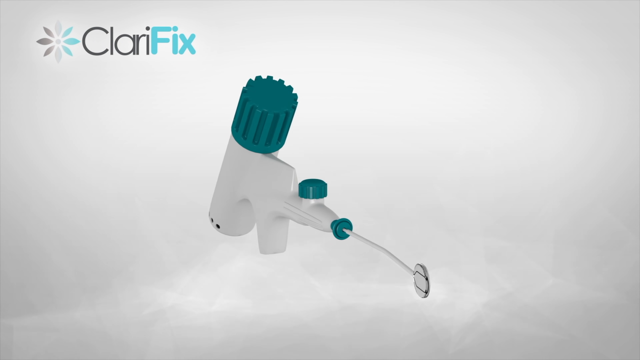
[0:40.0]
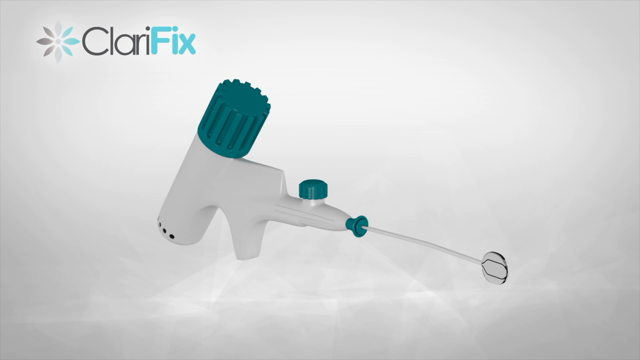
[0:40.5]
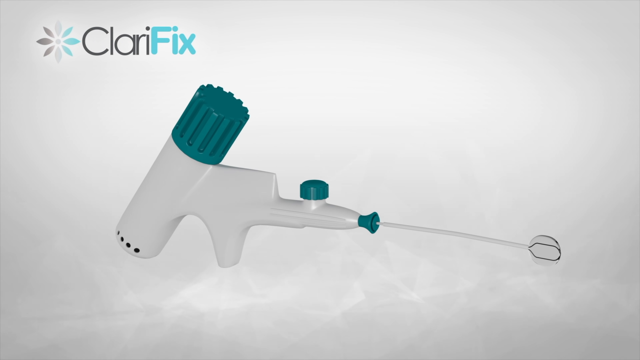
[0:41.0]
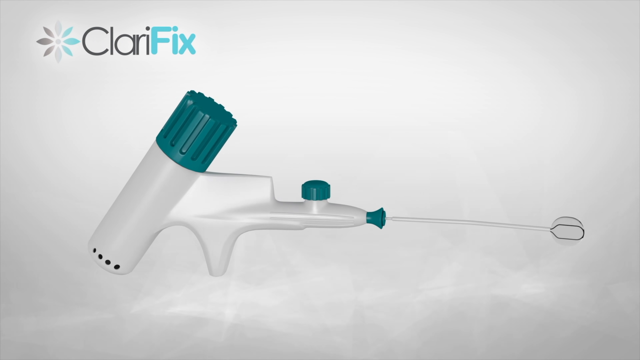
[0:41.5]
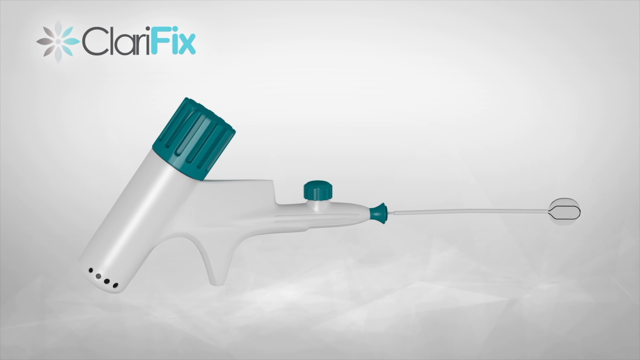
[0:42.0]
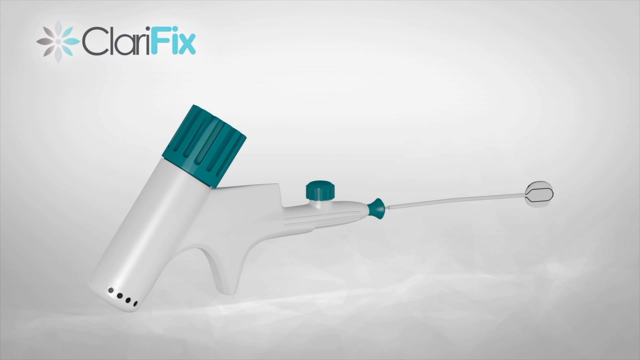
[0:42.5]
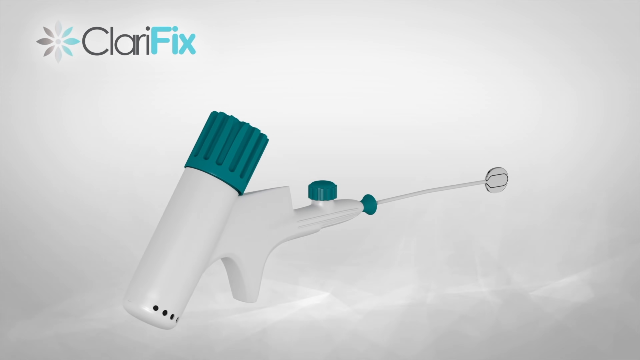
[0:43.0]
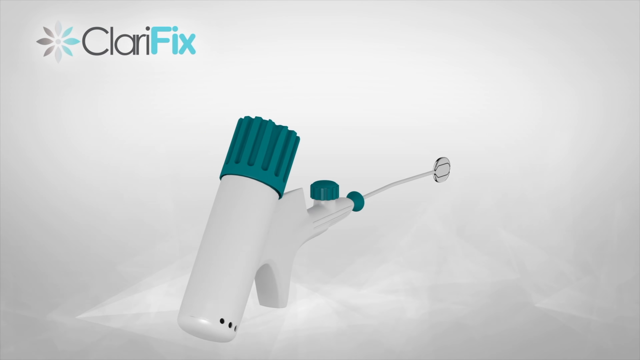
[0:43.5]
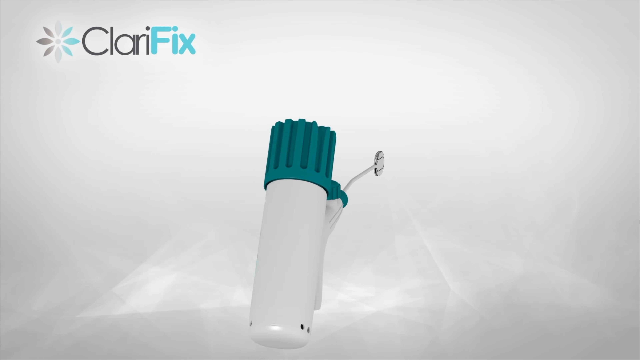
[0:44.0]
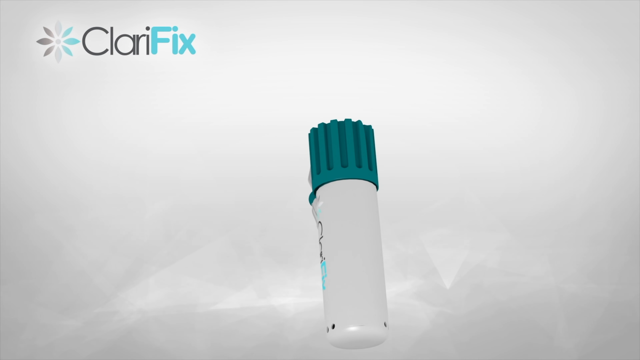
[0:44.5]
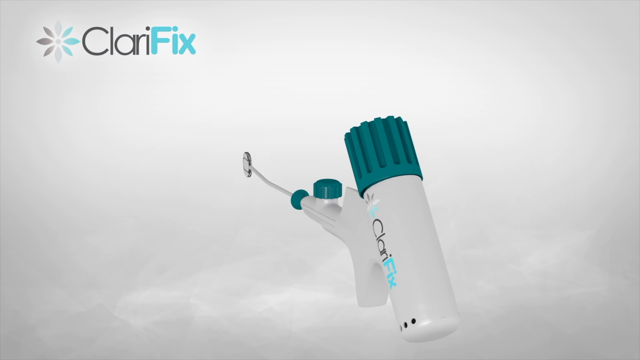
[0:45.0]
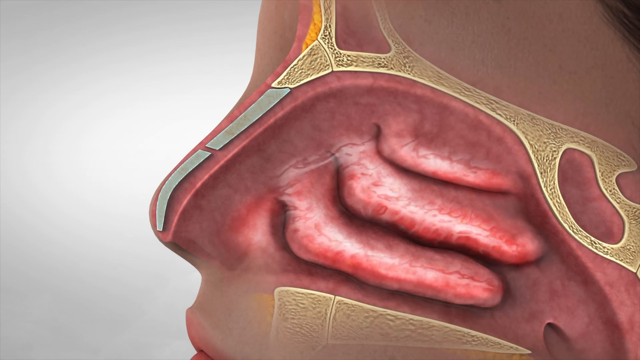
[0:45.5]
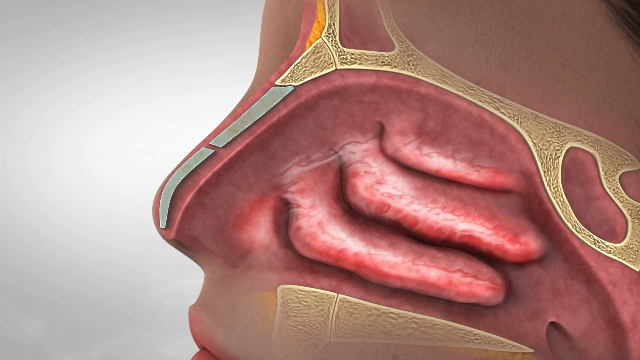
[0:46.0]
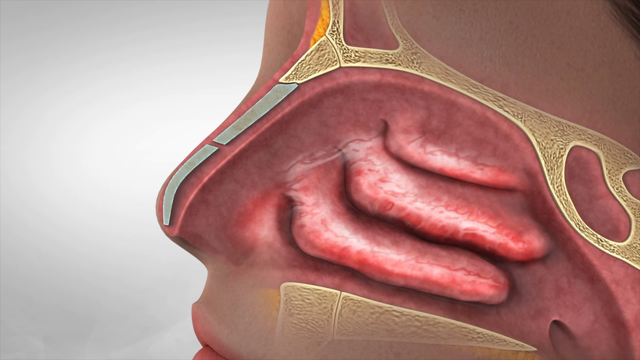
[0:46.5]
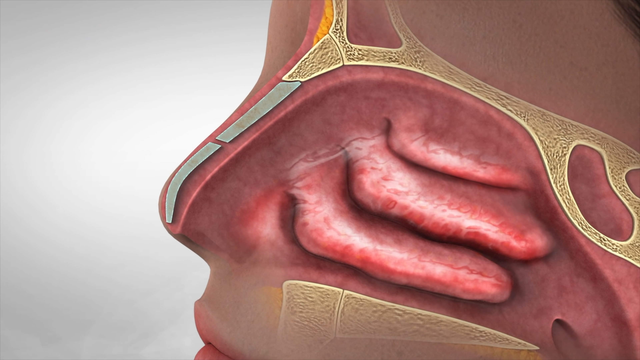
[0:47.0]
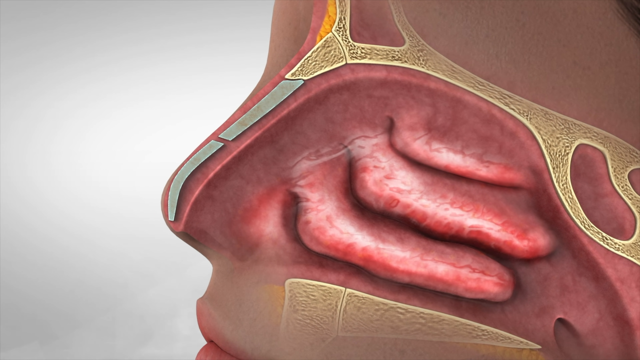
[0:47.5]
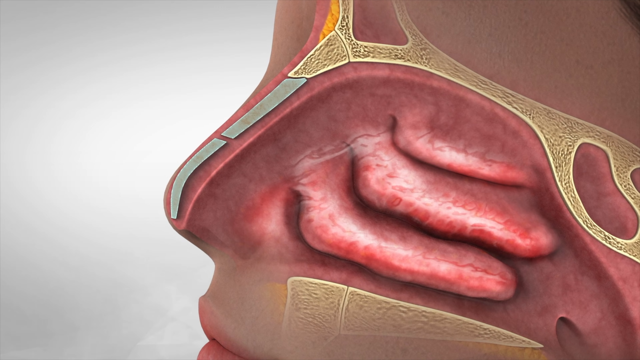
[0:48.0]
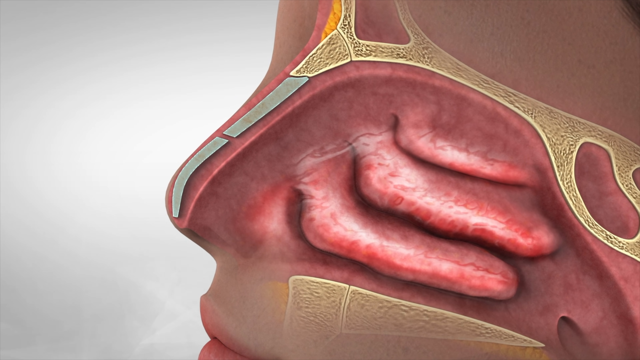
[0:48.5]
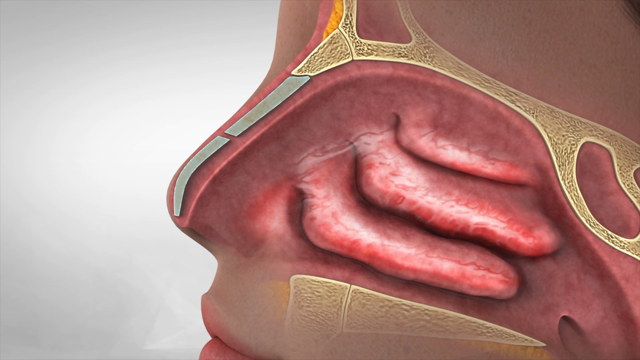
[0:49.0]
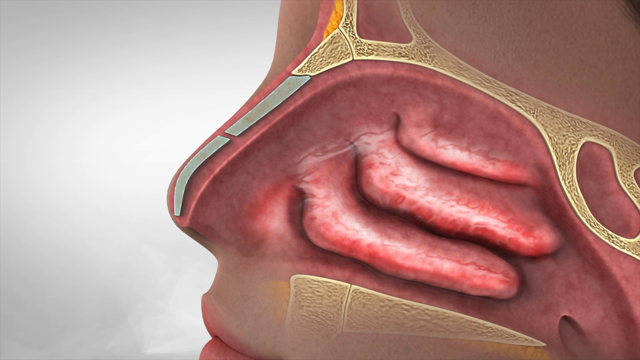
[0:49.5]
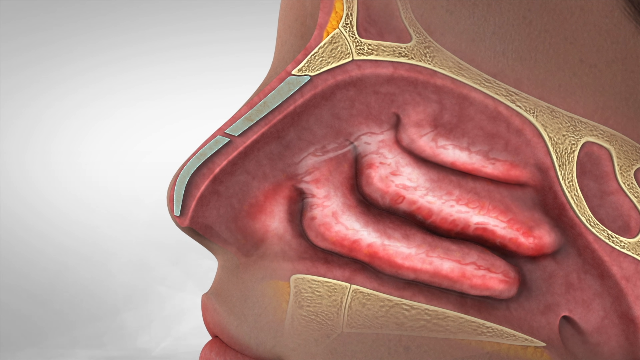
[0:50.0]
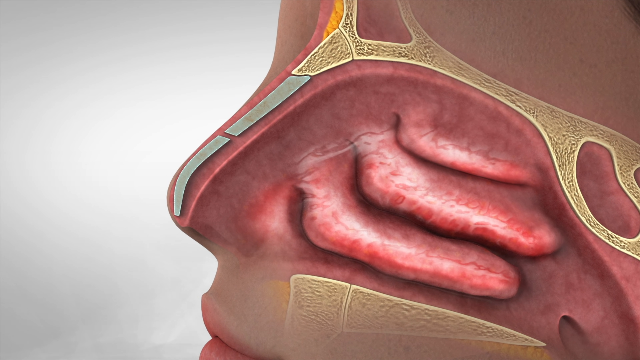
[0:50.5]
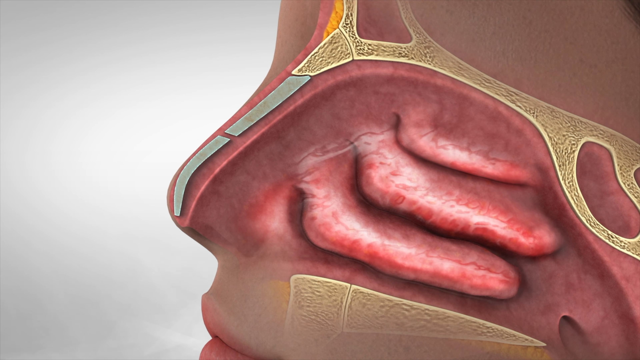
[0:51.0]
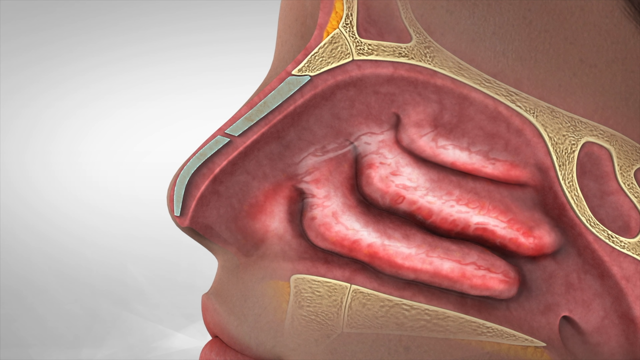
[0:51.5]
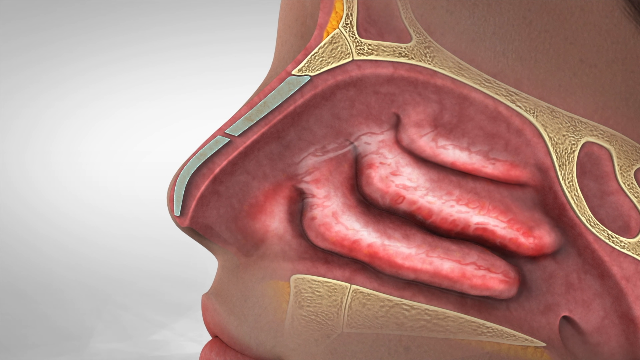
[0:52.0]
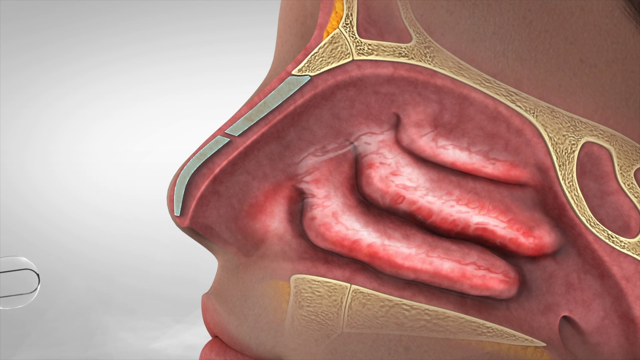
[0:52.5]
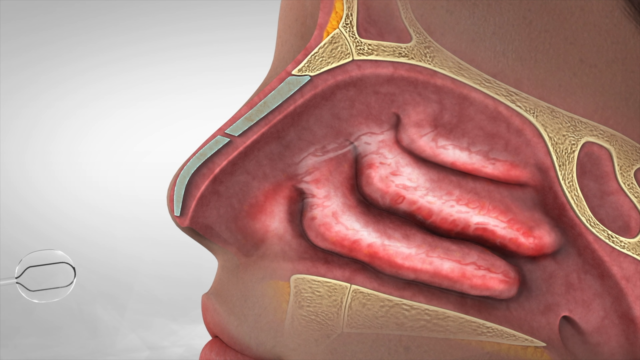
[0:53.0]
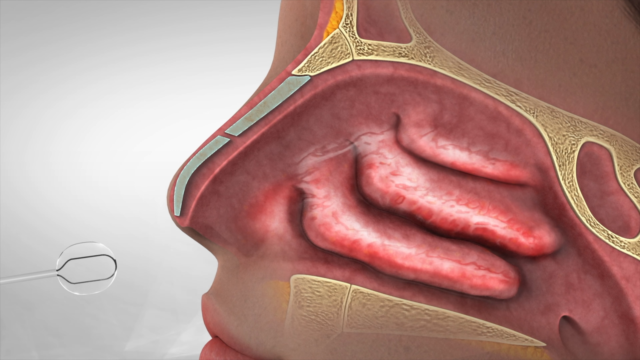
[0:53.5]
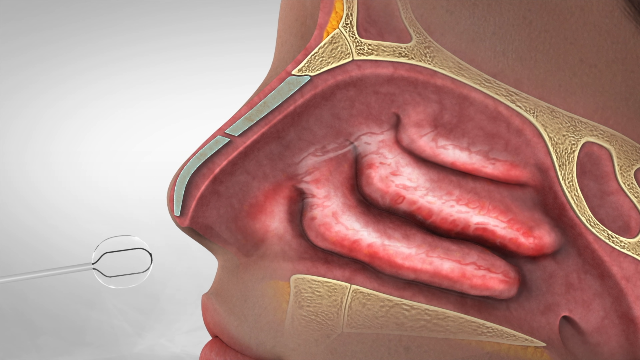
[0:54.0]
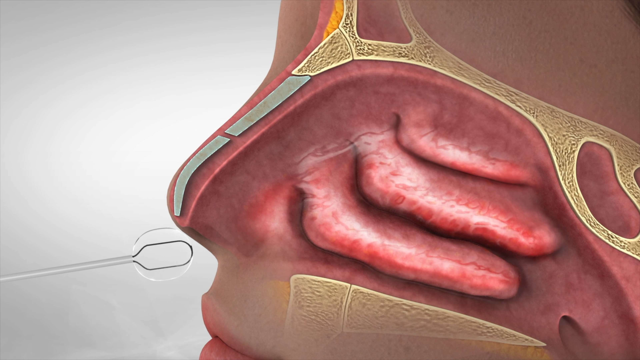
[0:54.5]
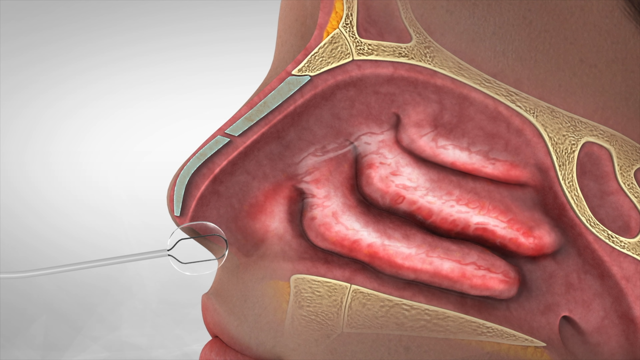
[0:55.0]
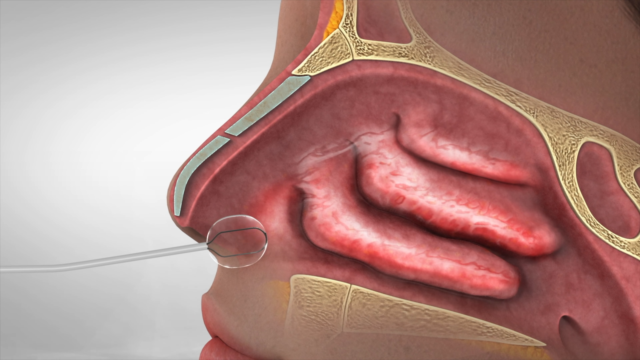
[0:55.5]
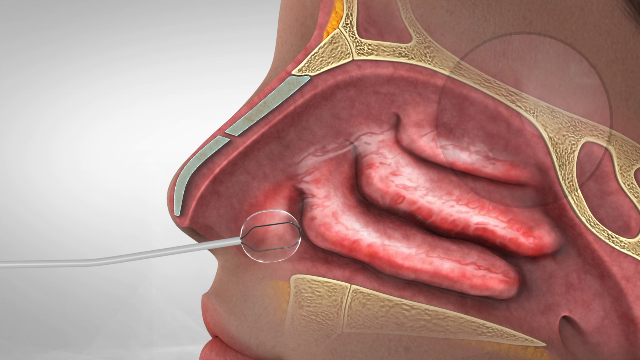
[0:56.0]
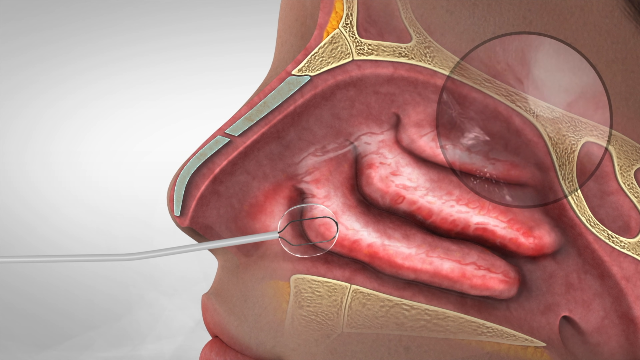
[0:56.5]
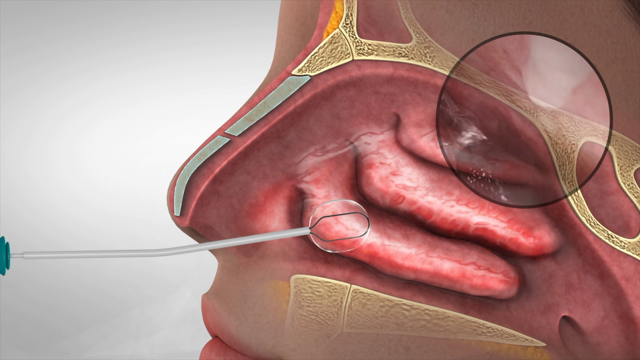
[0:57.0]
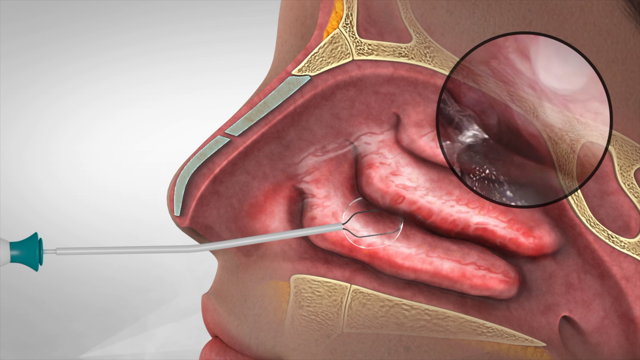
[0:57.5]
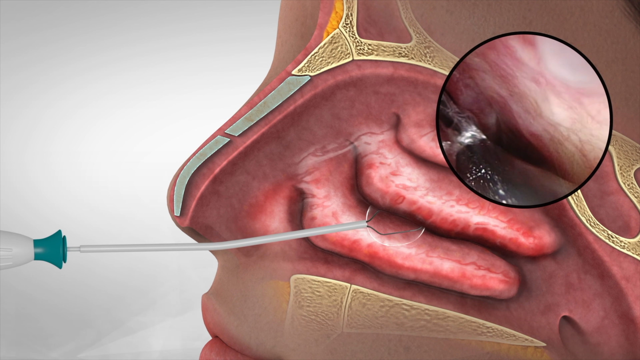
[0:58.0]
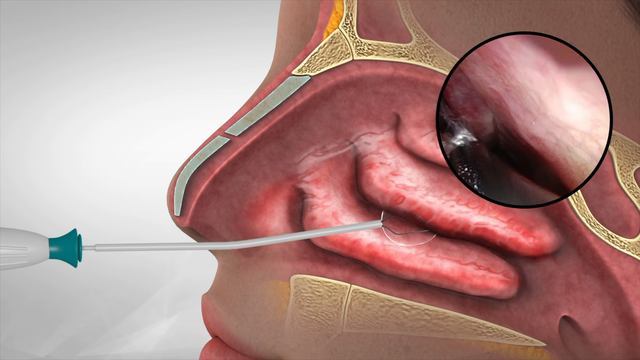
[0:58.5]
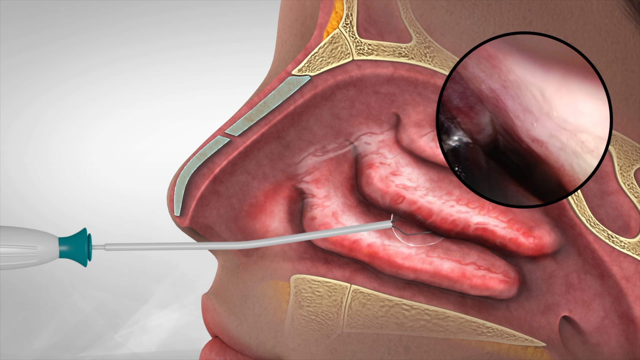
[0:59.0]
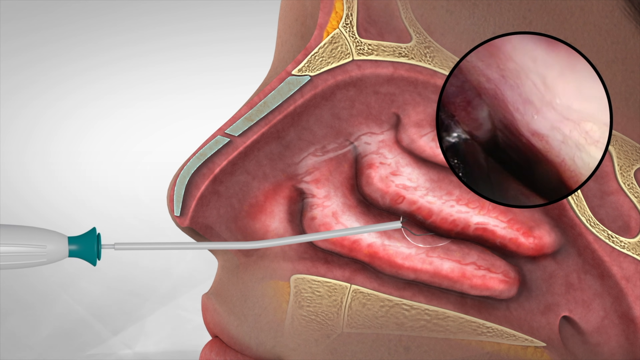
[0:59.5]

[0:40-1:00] The device continues to spin around. It looks like a swab combined with some sort of spotlight, laser gun or water gun type of device, with a cap, a spout and a very long antenna. The Clarifix brand logo is in the top left corner as the product spins. The animated woman returns, and the longer antenna piece of the device is inserted through her nostril. An inside camera view follows of what appears to be the inside of a real human being's nostril and nasal cavity, apparently showing which areas are congested. The camera looks very flat.